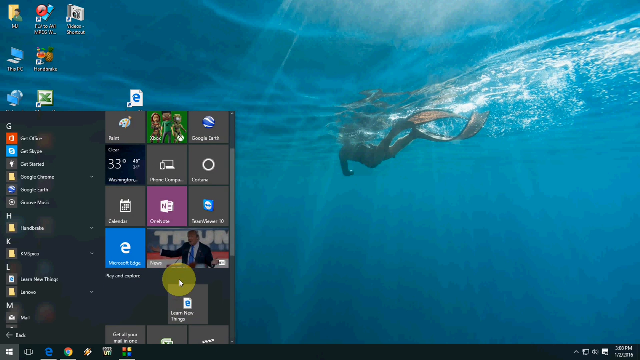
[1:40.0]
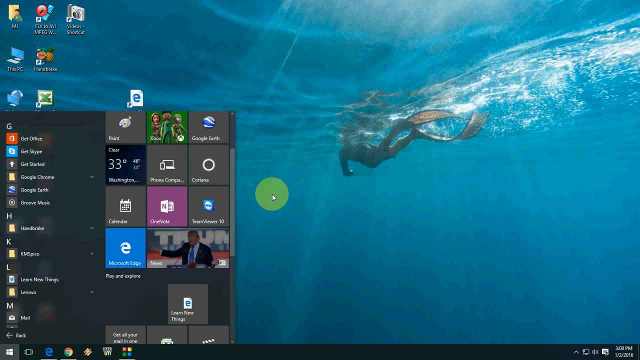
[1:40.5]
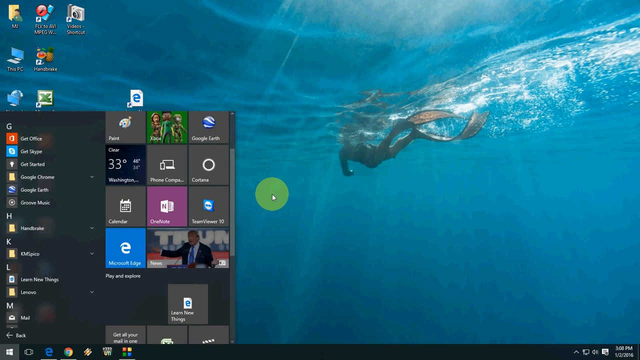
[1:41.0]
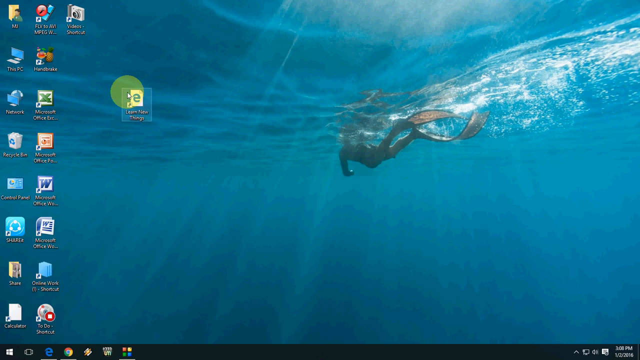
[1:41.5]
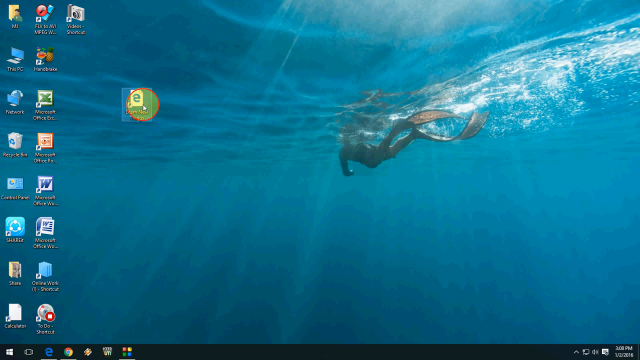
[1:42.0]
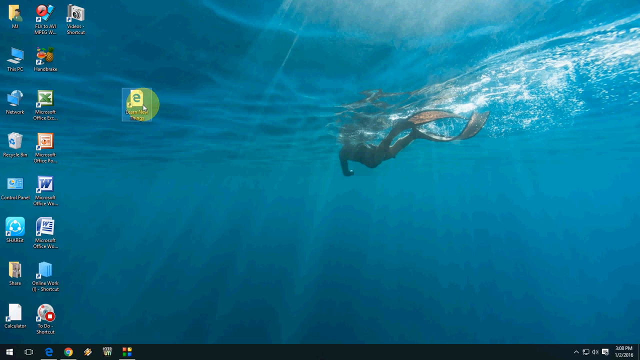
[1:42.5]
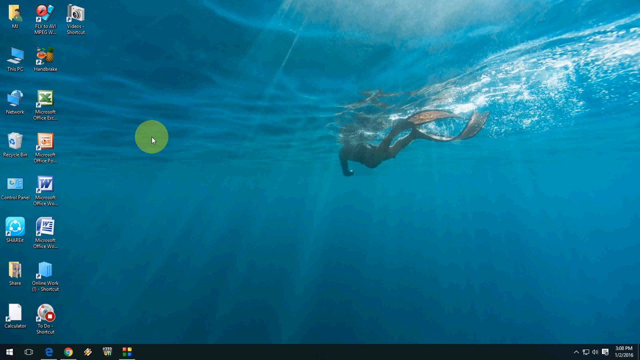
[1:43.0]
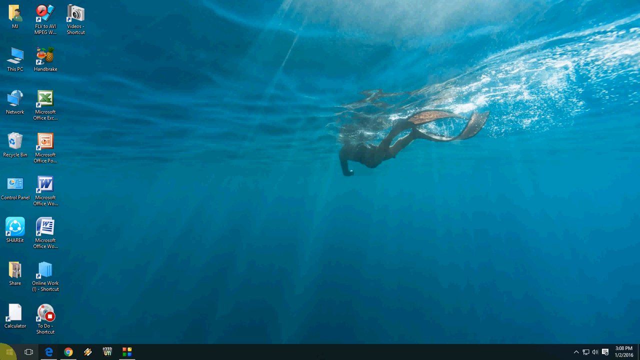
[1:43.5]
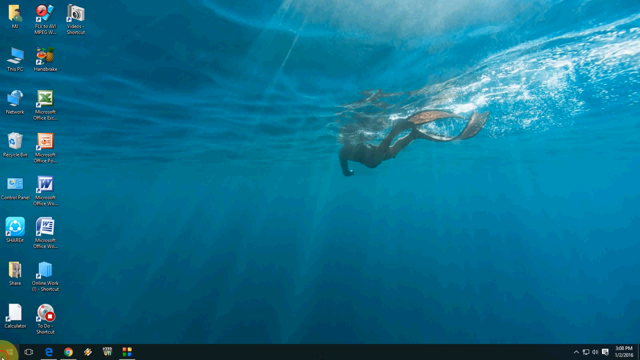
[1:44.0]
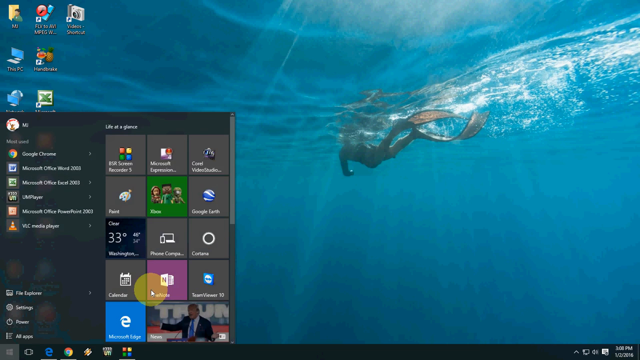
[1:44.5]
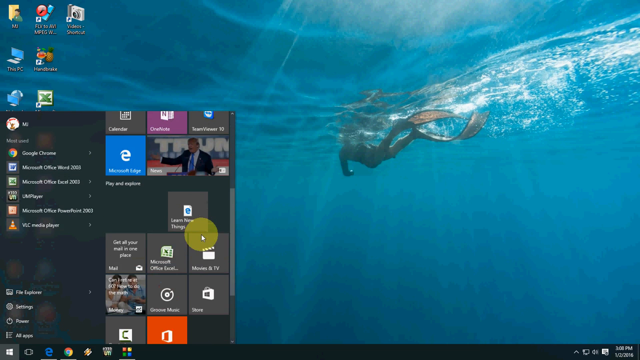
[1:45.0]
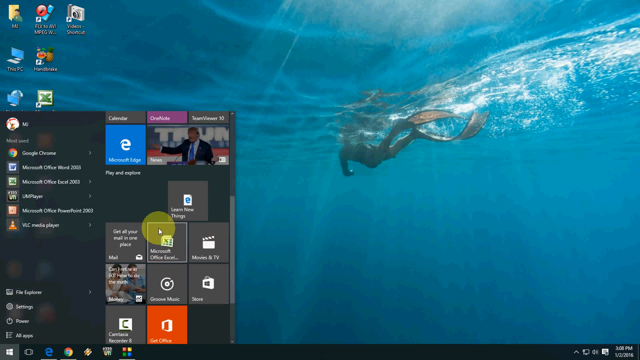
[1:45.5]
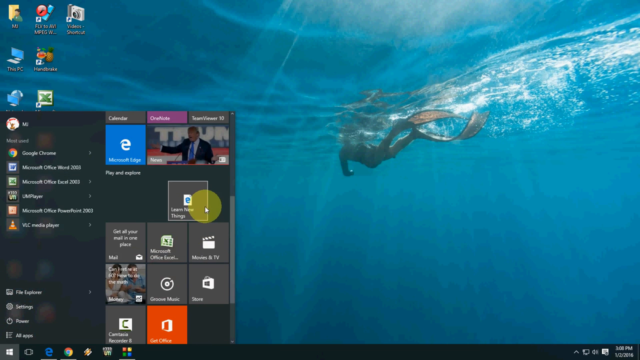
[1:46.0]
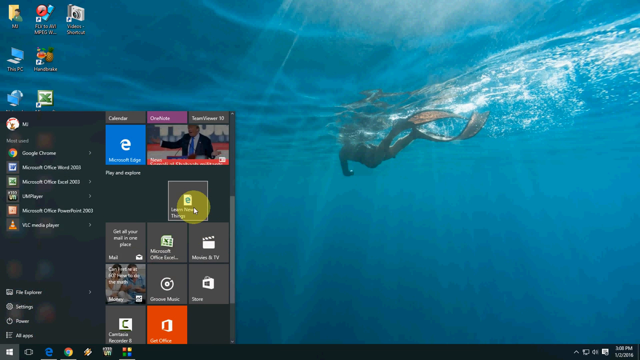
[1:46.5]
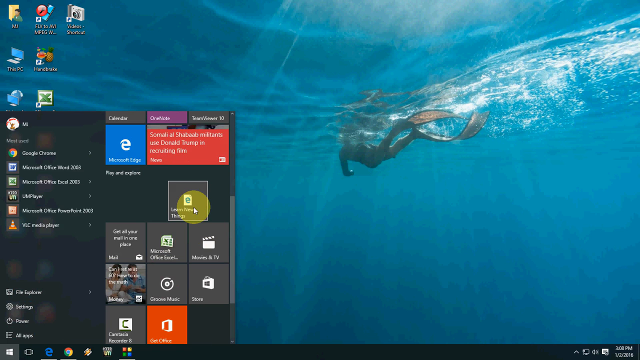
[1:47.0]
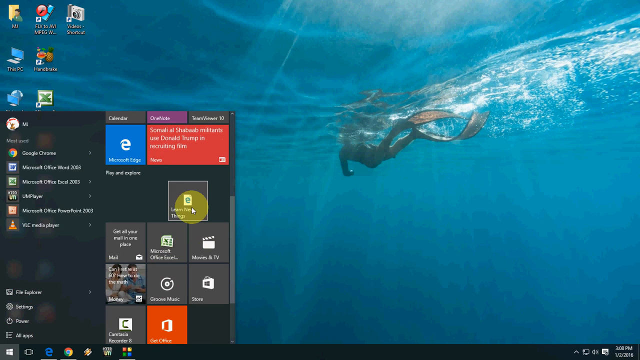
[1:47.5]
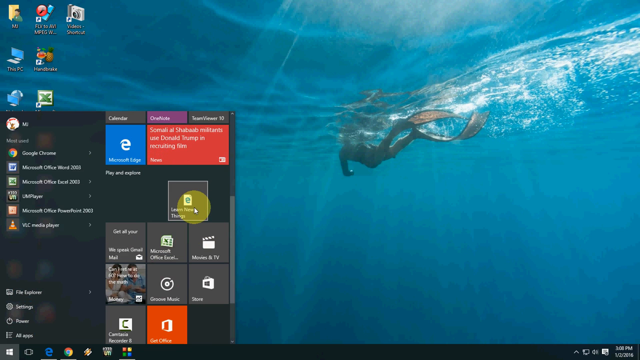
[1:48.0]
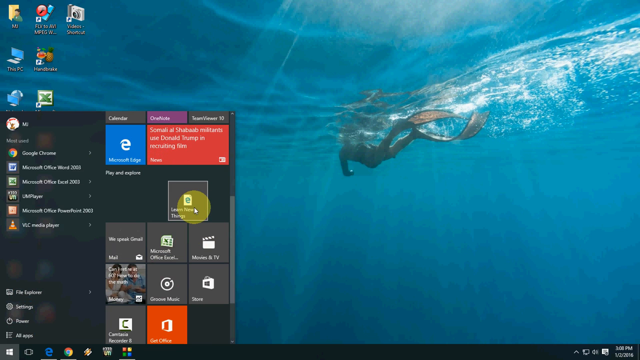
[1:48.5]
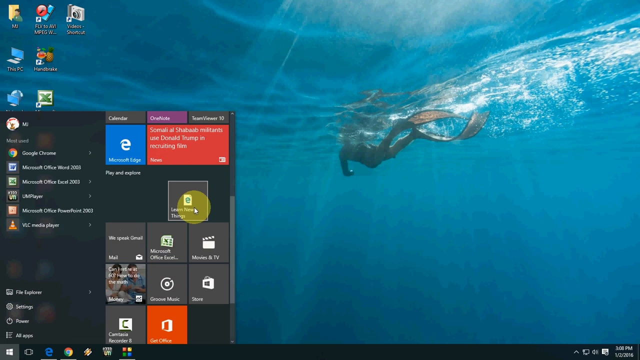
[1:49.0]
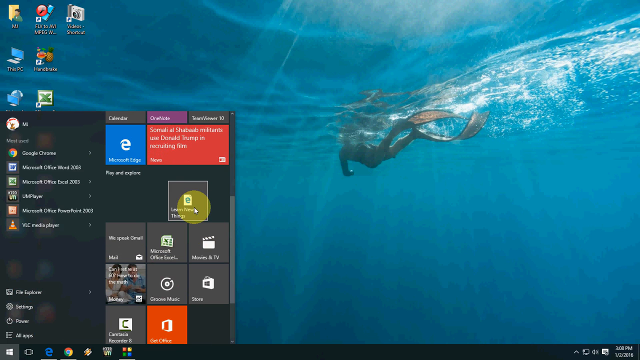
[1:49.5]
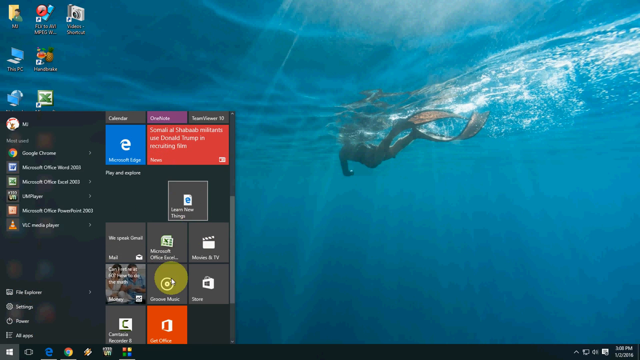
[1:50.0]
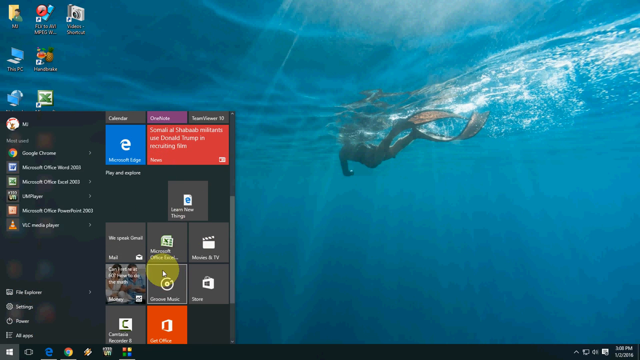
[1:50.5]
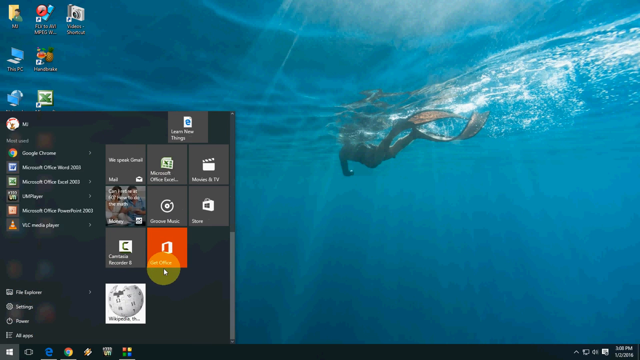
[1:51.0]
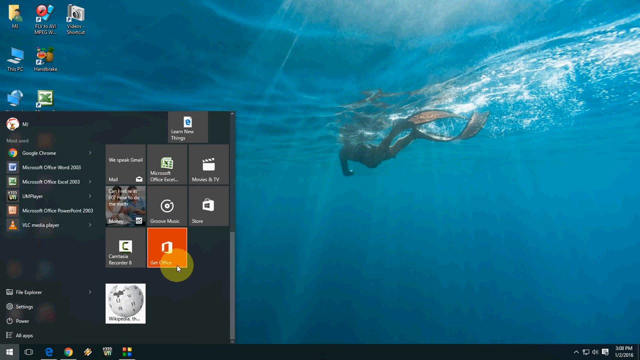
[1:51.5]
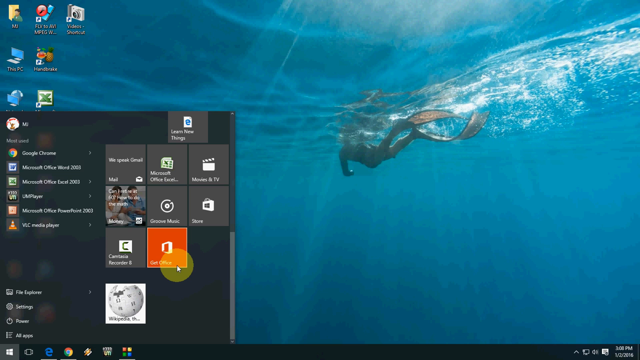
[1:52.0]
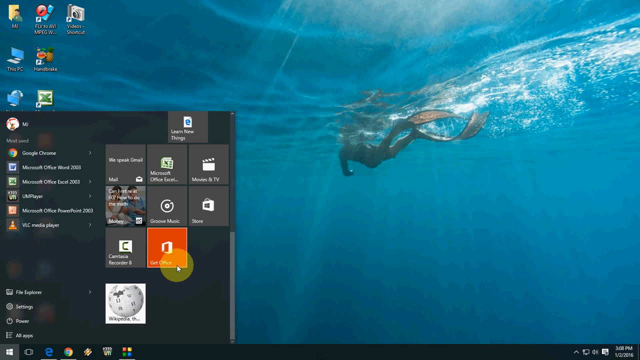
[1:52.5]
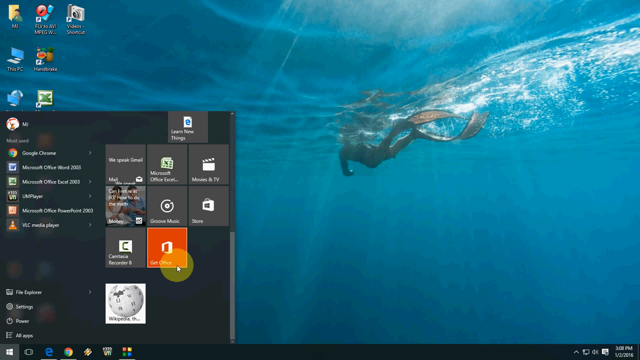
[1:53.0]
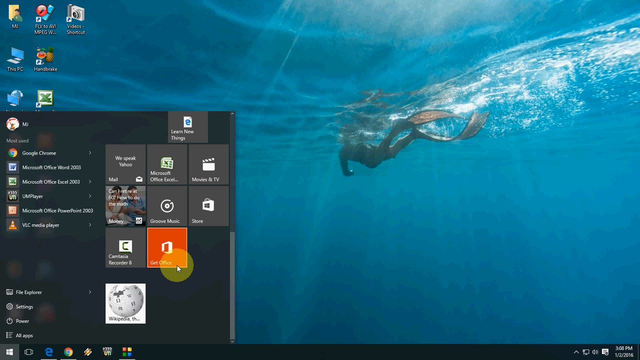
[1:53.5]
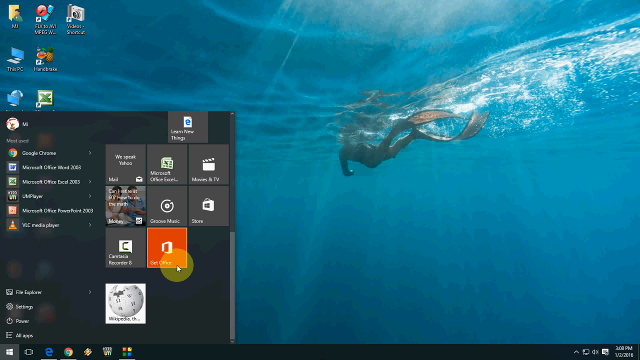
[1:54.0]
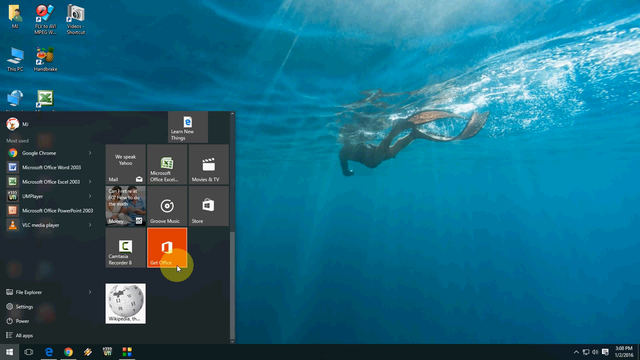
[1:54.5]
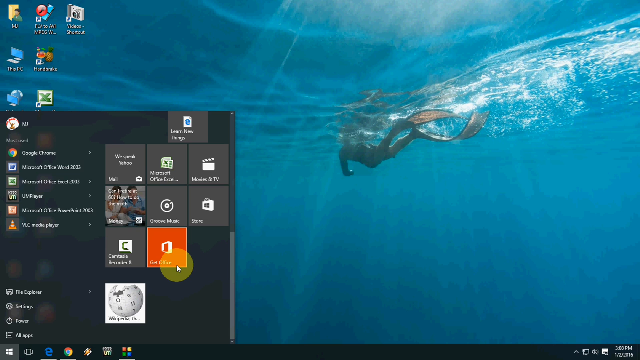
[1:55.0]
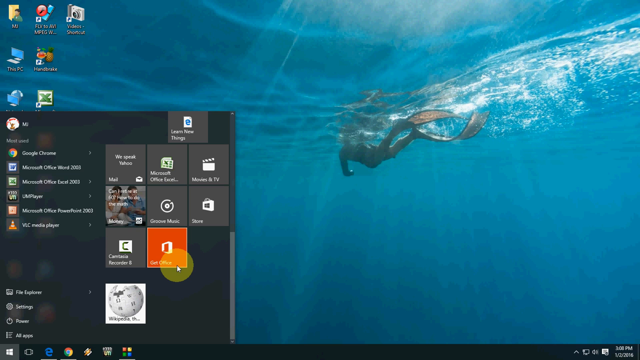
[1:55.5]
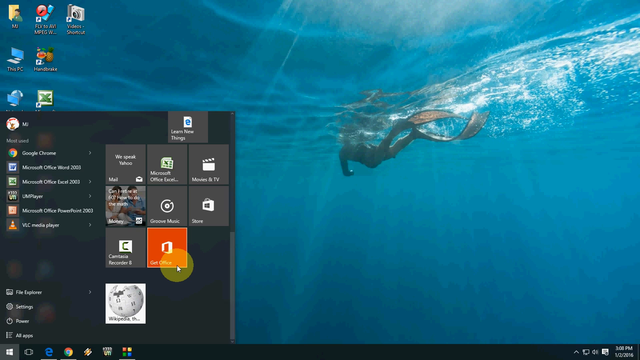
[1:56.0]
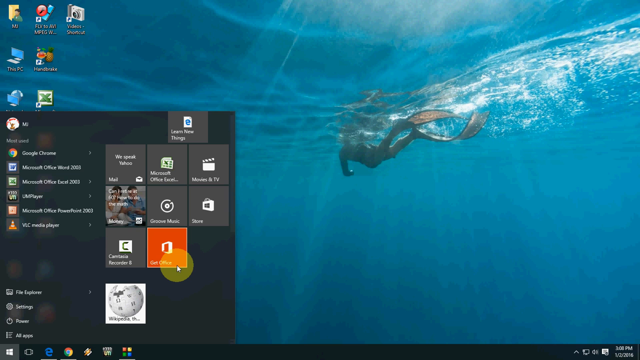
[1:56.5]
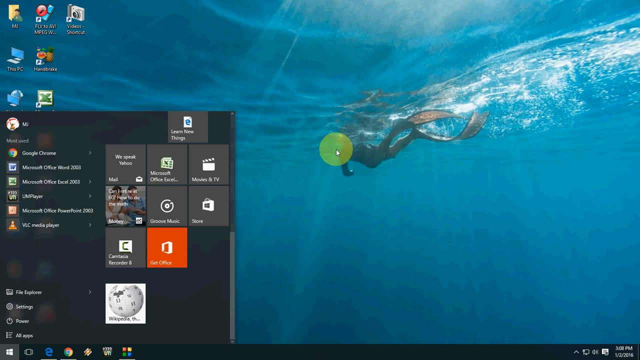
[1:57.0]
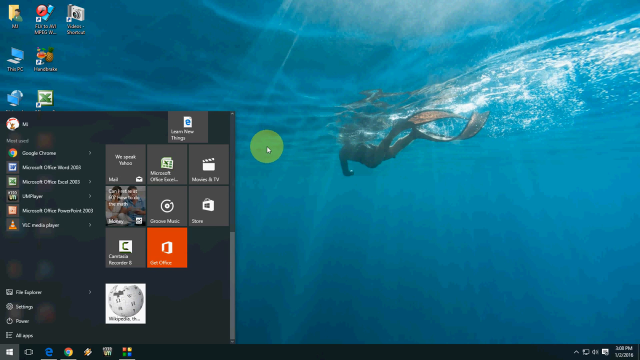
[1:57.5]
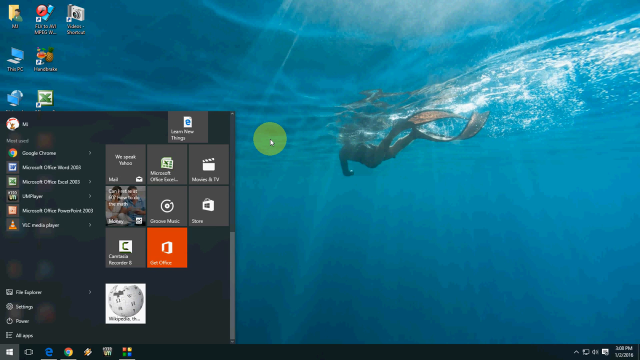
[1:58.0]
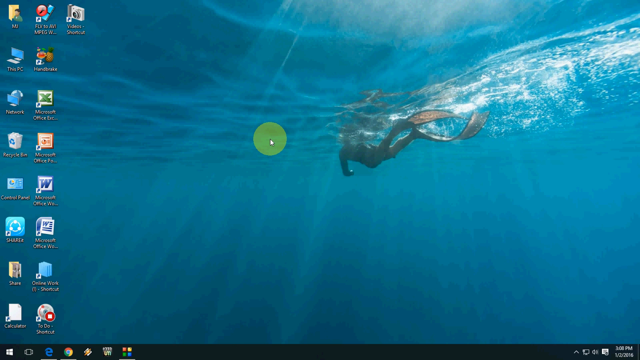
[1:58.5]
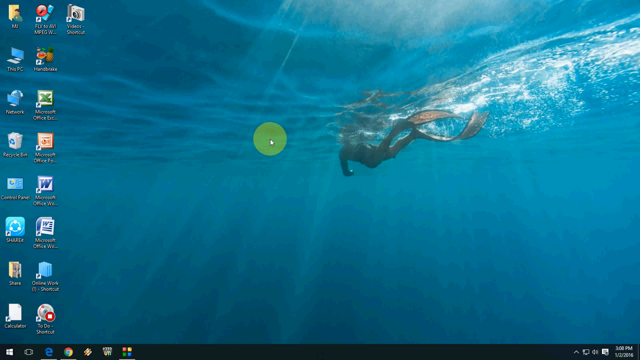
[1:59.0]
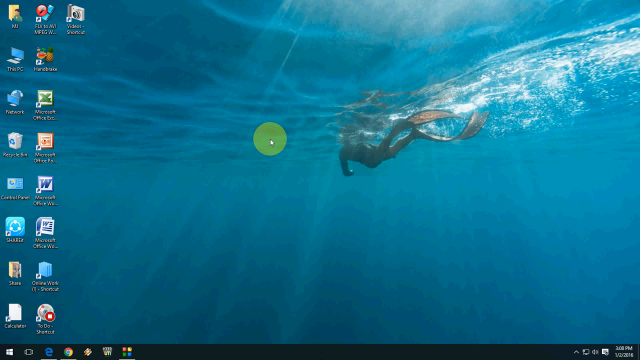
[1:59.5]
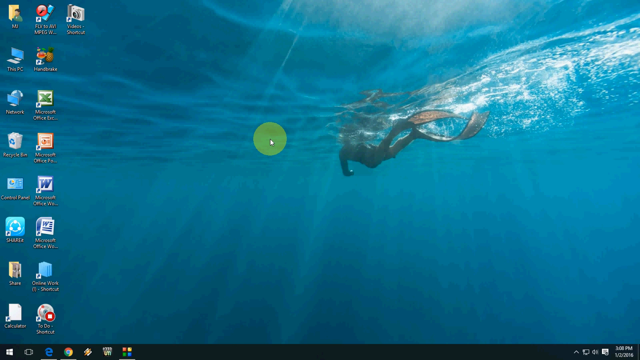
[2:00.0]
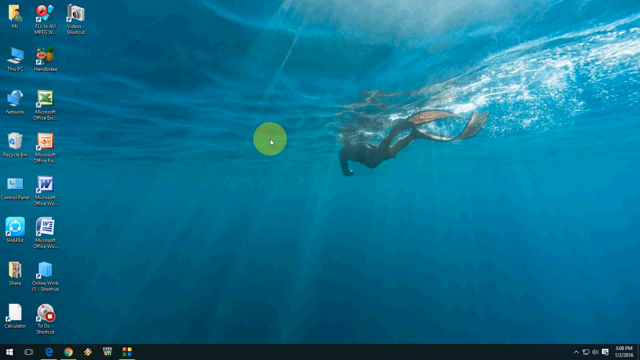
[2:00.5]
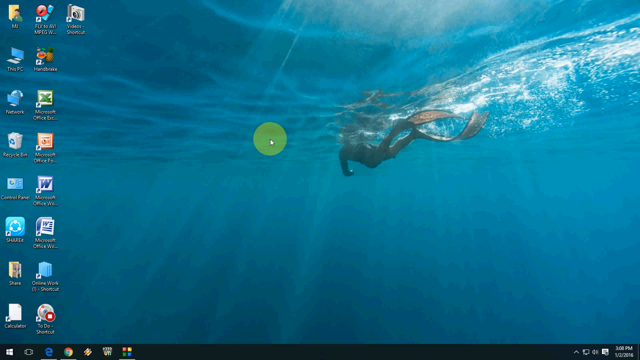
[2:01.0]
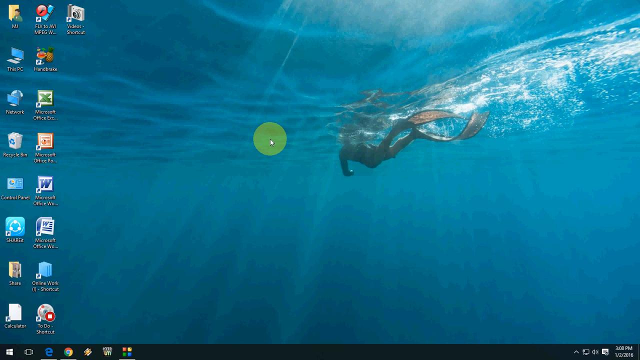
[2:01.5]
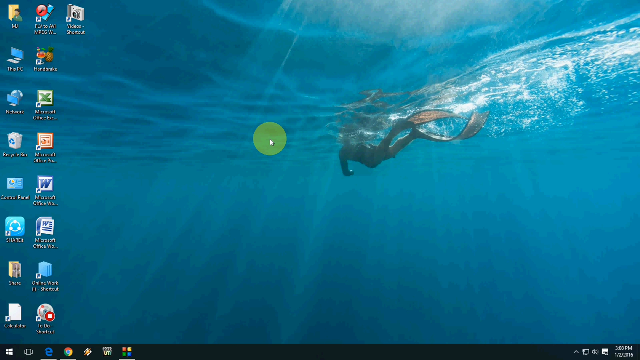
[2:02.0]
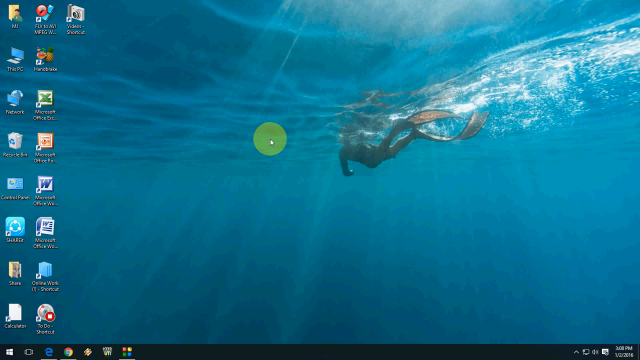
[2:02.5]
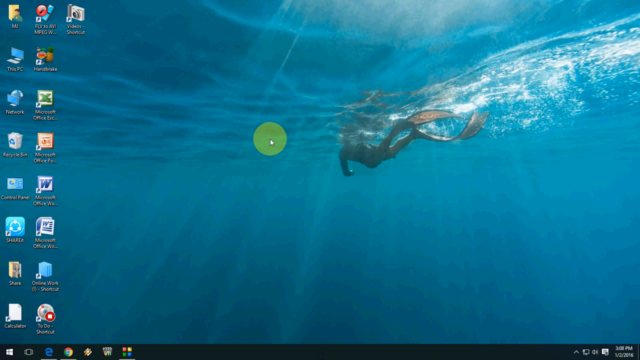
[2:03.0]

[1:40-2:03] The Microsoft Windows desktop is shown, its wallpaper depicting a person swimming just under the surface of blue water. The Microsoft Windows menu appears, expanded either by clicking the Windows logo on the left side of the screen or perhaps by simply hovering the mouse, and it blocks out about one-fourth of the desktop. The user moves the mouse, double-clicks the shortcut icon on the desktop, and drags it into the Microsoft Windows toolbar. Other options such as OneDrive, Microsoft Excel and Movies and TV are available to click. The desktop holds various icons such as Microsoft Excel, a shortcut to Internet Explorer, and This PC, suggesting this may be an older version of Windows.